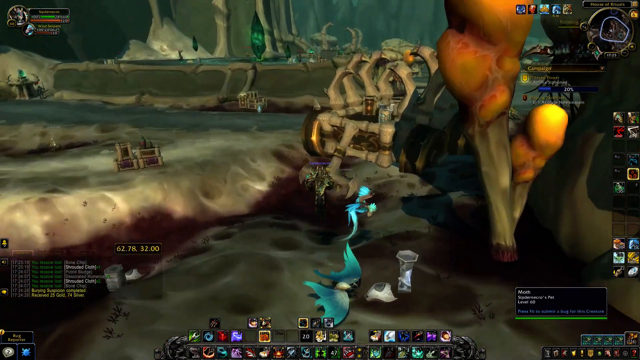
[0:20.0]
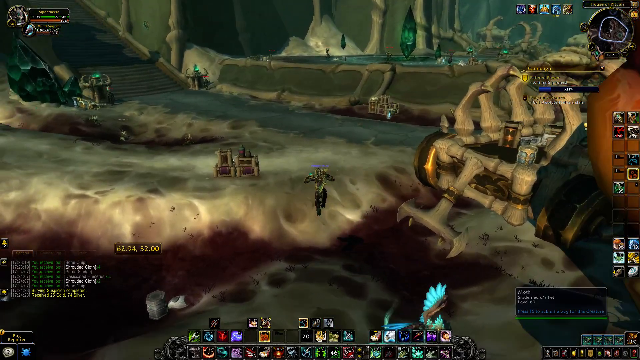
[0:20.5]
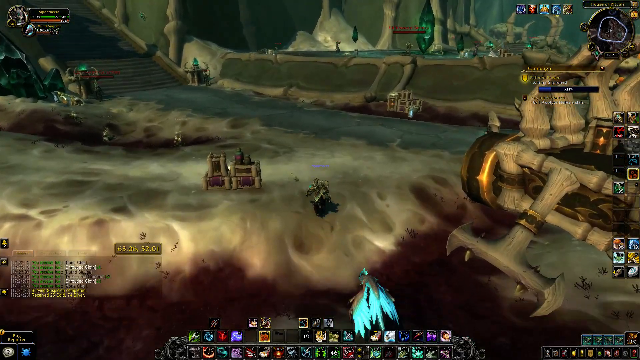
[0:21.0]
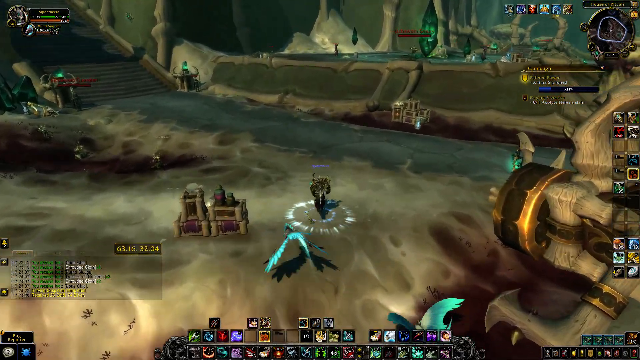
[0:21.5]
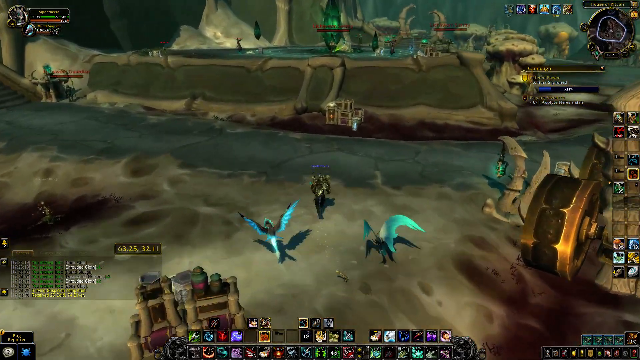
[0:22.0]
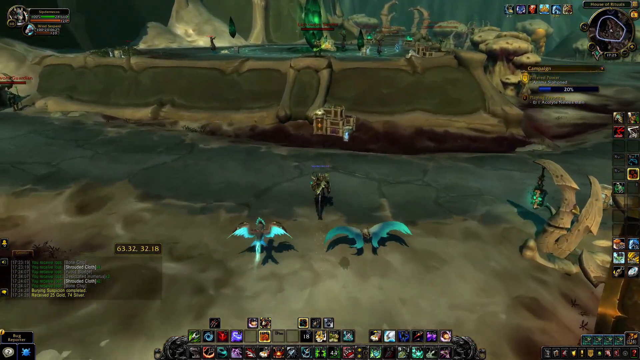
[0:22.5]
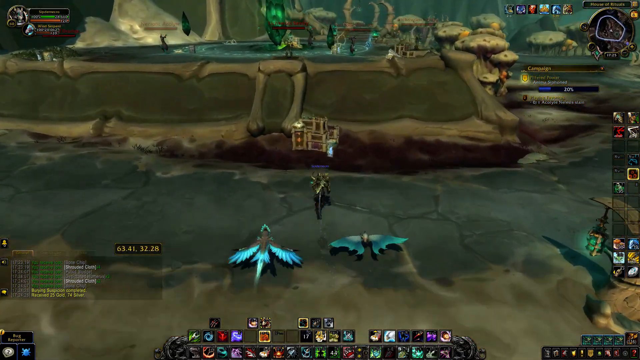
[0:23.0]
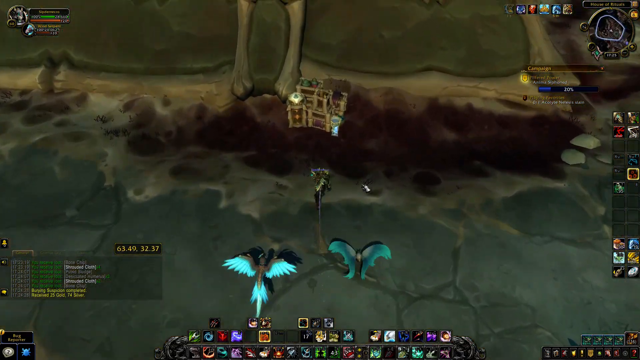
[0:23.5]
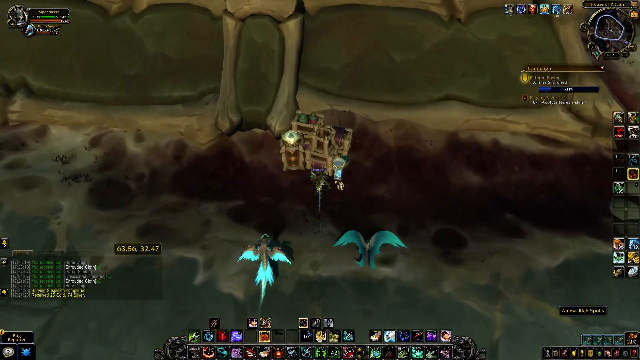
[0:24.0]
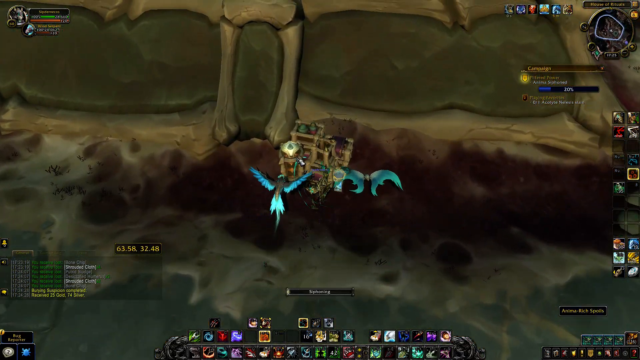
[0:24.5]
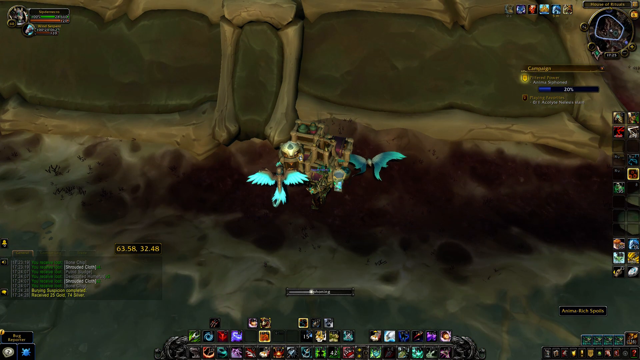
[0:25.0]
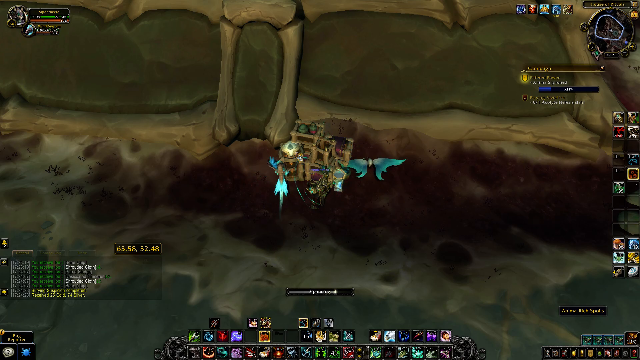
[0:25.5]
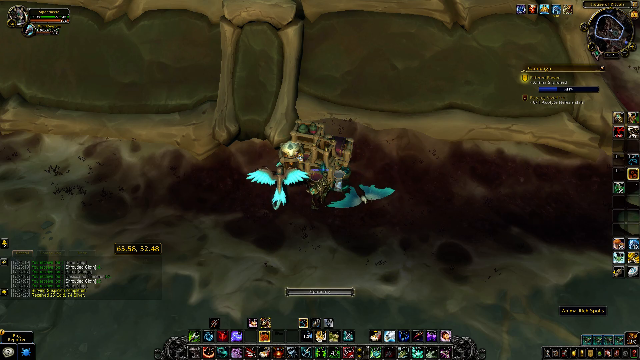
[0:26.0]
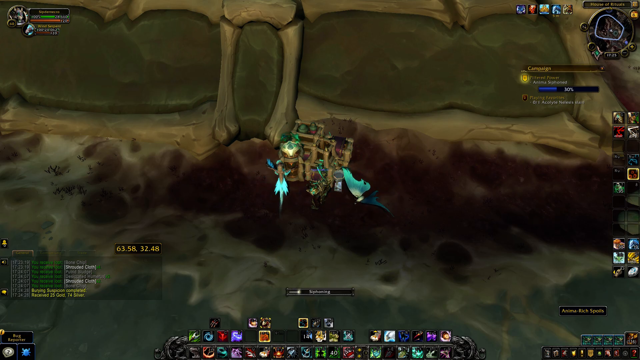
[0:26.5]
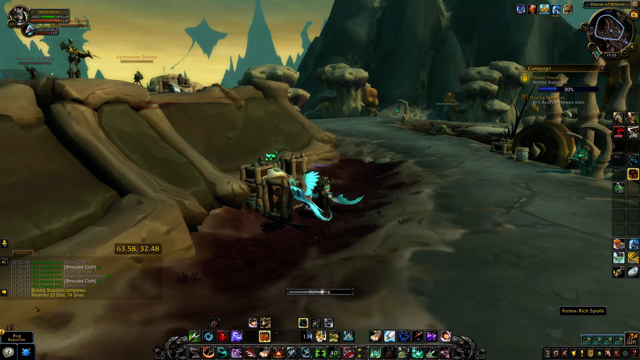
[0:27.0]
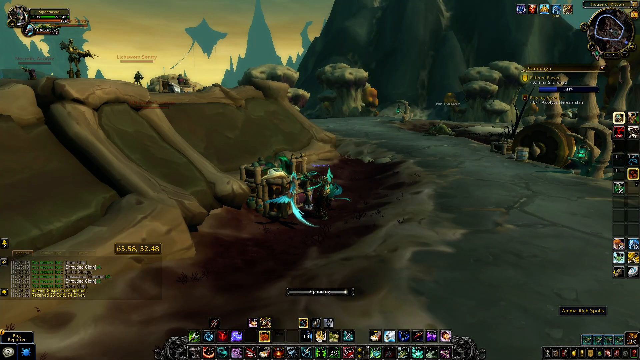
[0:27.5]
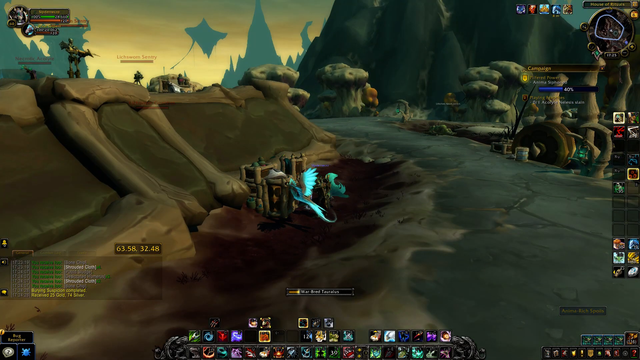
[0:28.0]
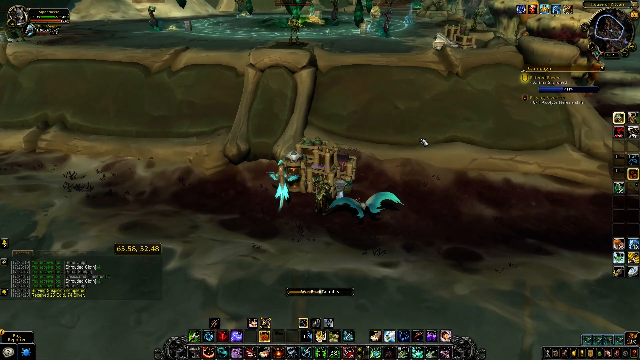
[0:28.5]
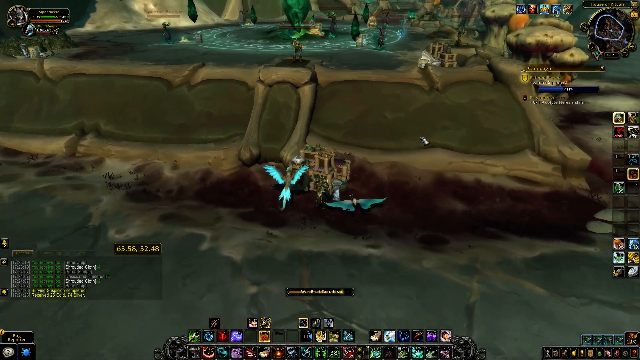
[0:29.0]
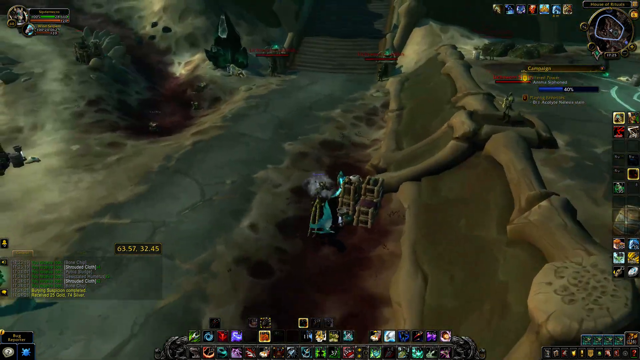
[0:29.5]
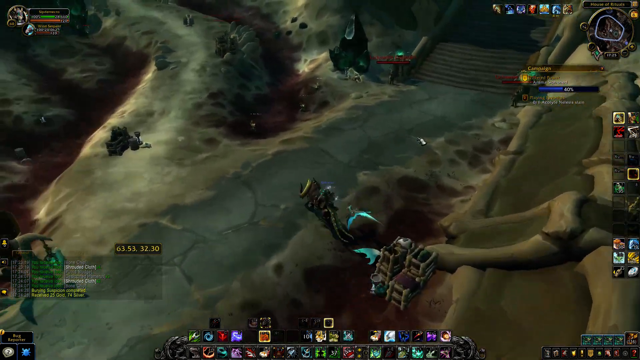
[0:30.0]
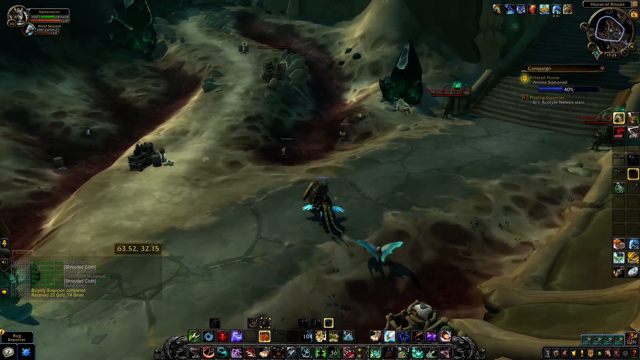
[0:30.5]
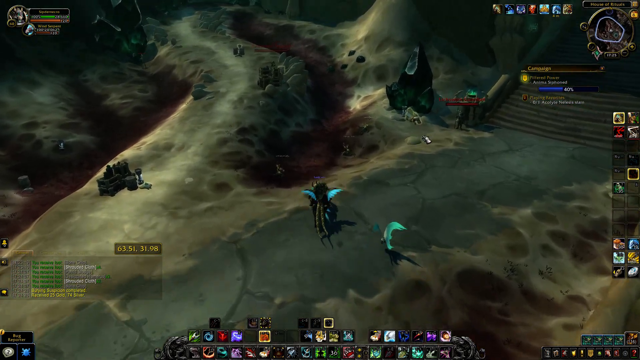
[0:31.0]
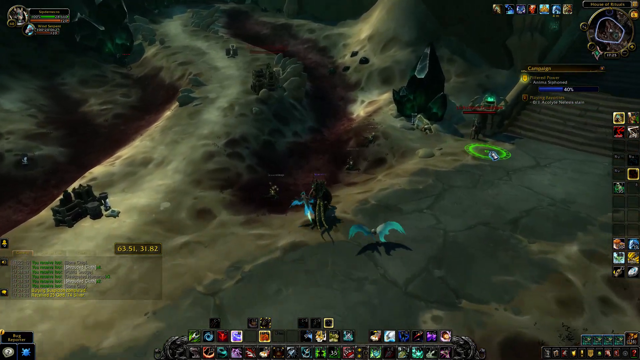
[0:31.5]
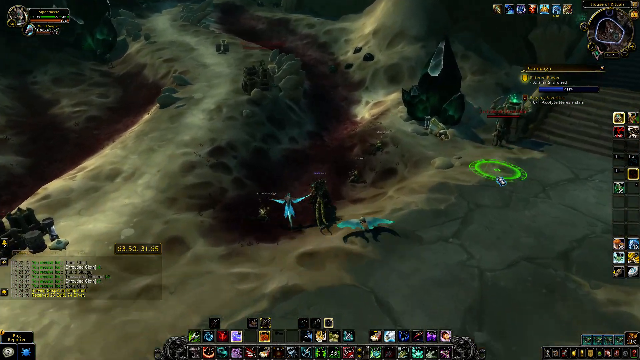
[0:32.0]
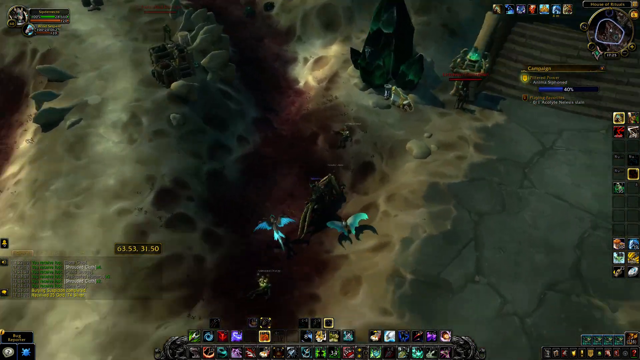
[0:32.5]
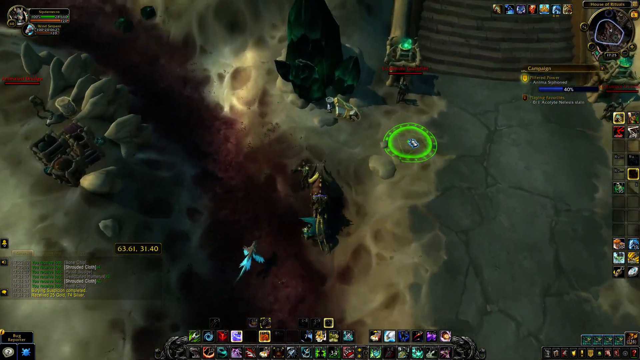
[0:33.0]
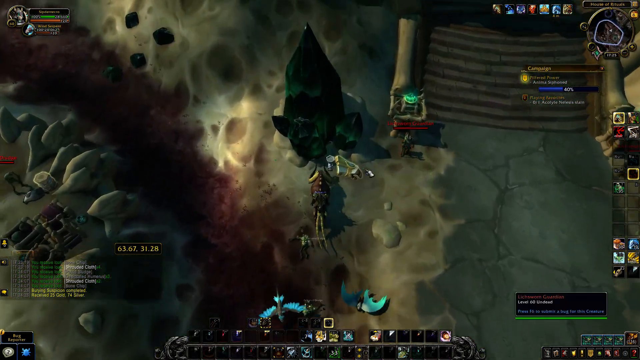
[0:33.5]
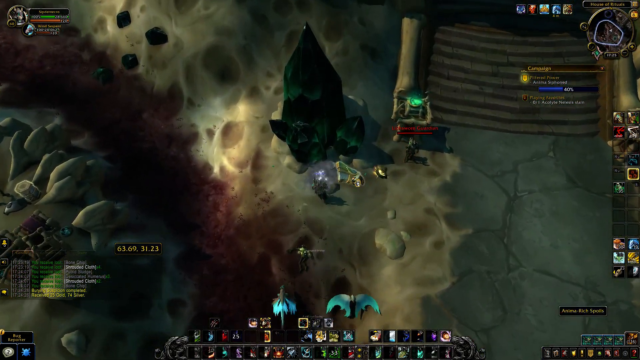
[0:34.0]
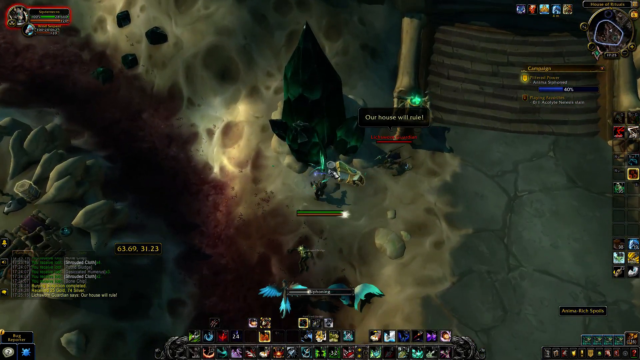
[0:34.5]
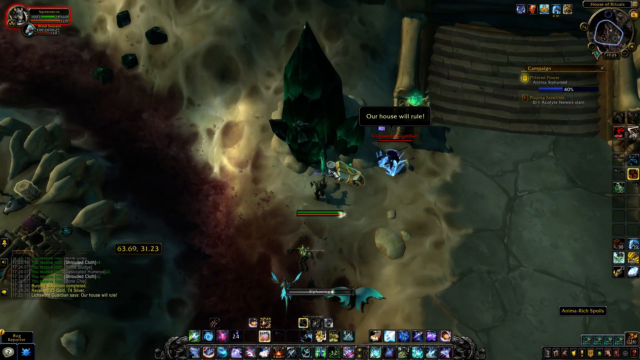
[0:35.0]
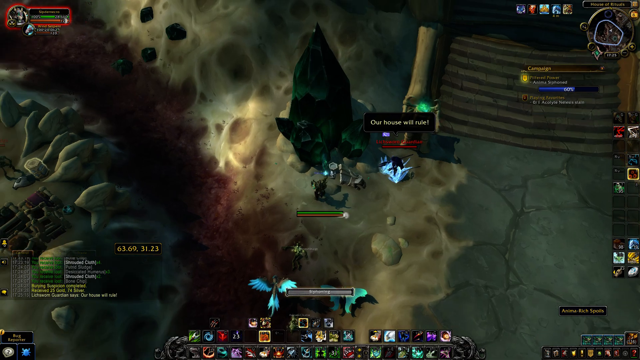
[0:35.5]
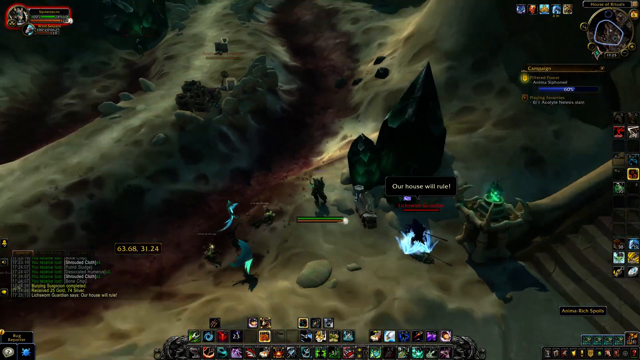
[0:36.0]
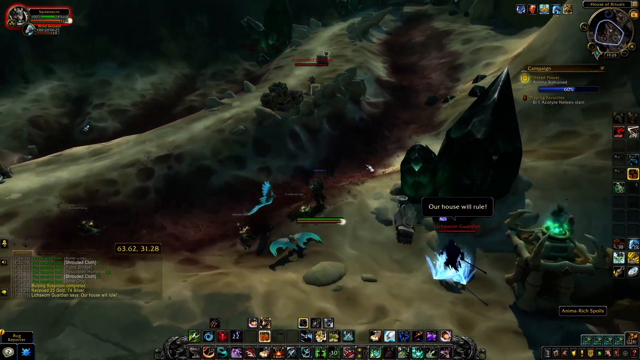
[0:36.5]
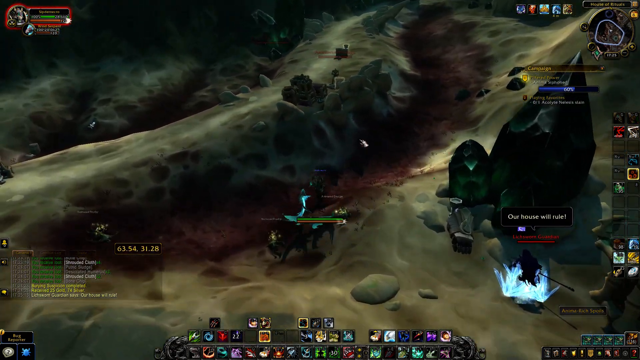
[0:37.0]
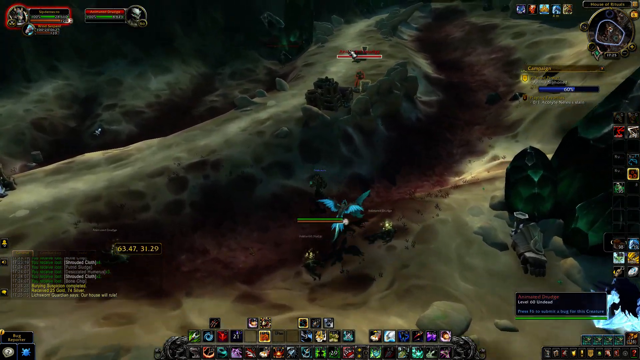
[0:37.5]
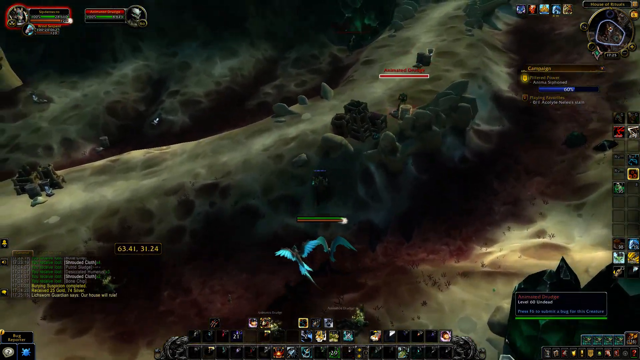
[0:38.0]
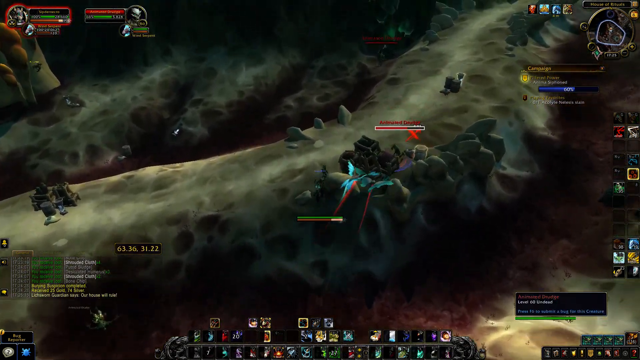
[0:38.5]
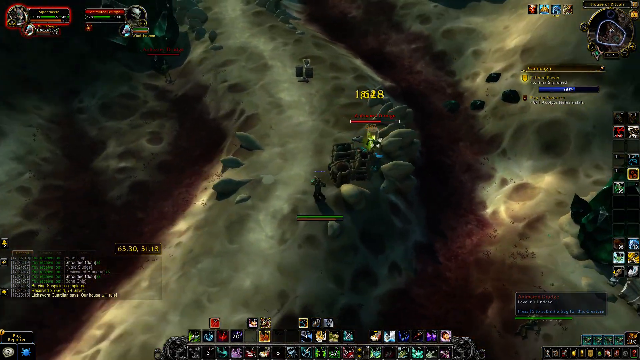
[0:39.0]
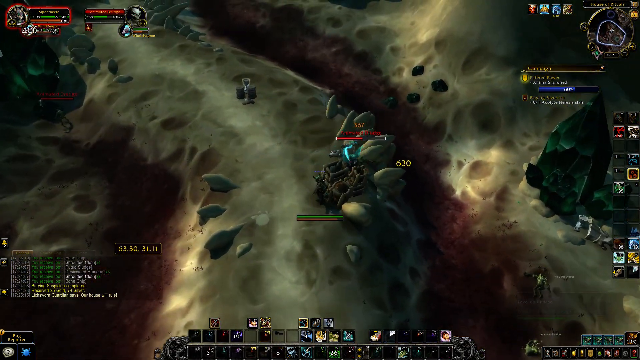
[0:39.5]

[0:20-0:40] The robot character turns and runs, with the two blue birds still flying after him. He reaches something like a box, apparently some sort of shelter, and maybe powers up; he does not move at all for maybe 3 seconds. He stands in front of the shelter, which looks like a miniature wooden cabin, while the two birds fly over him. Many green lights go back and forth between the robot and the birds, apparently because they are fighting. The robot character runs away. Over to the right there is a green circle. The robot character runs to something like a giant stone, then turns around. The two birds keep following him the whole time, and the robot character seems to be winning.